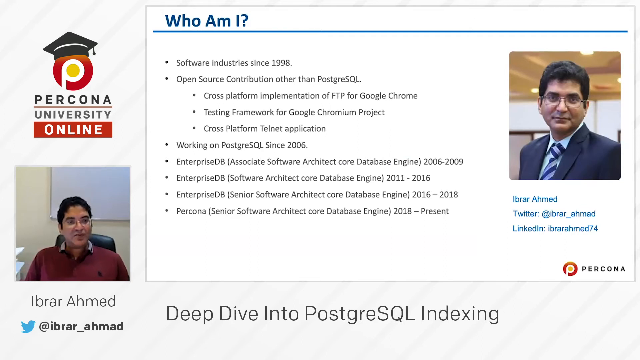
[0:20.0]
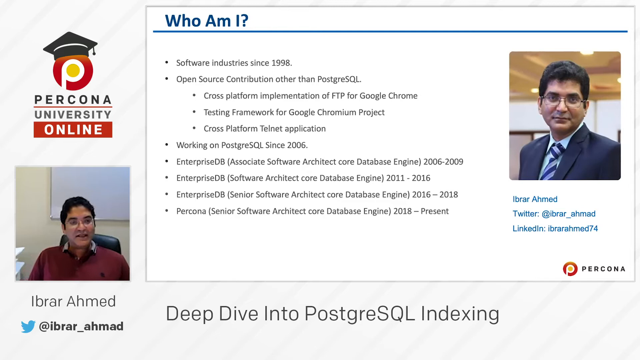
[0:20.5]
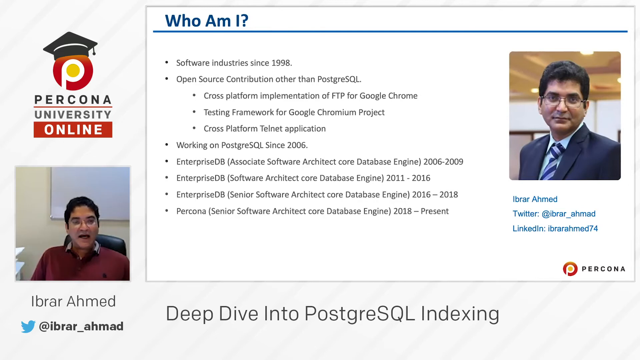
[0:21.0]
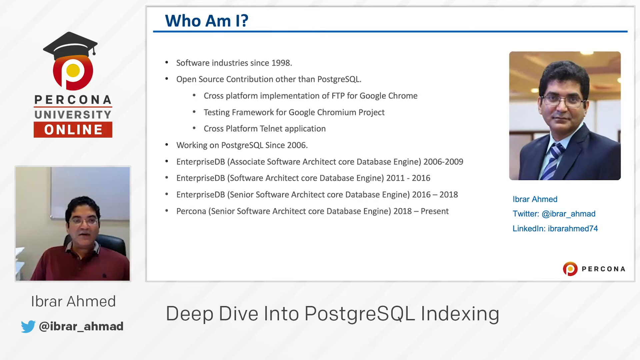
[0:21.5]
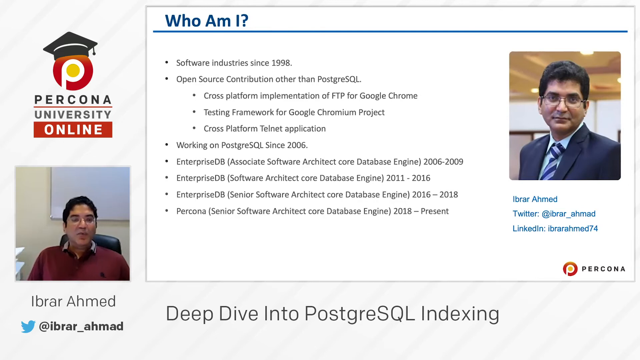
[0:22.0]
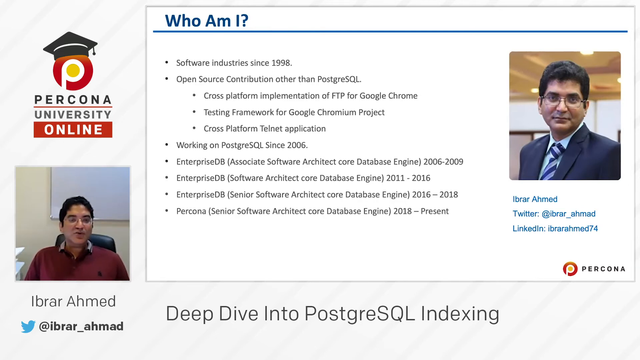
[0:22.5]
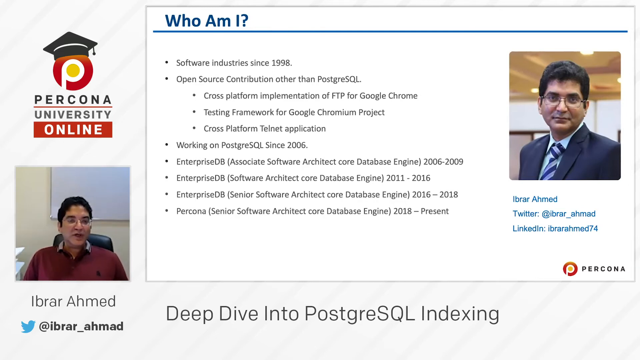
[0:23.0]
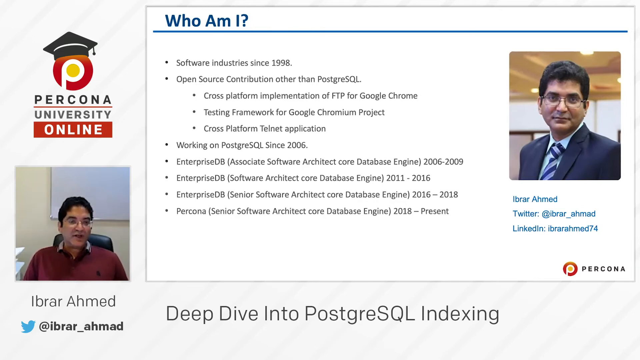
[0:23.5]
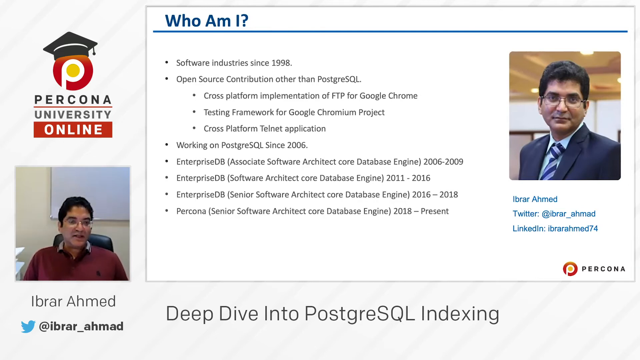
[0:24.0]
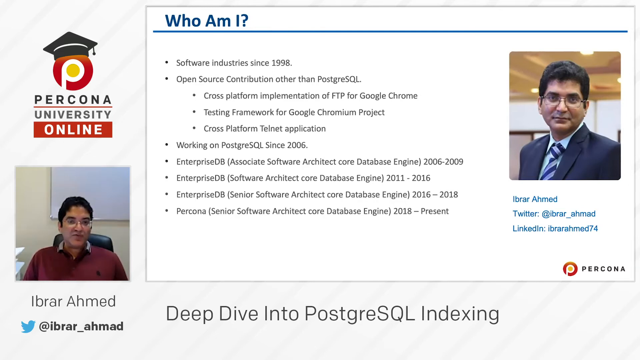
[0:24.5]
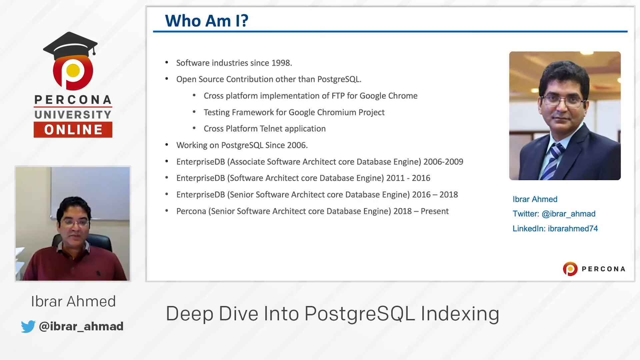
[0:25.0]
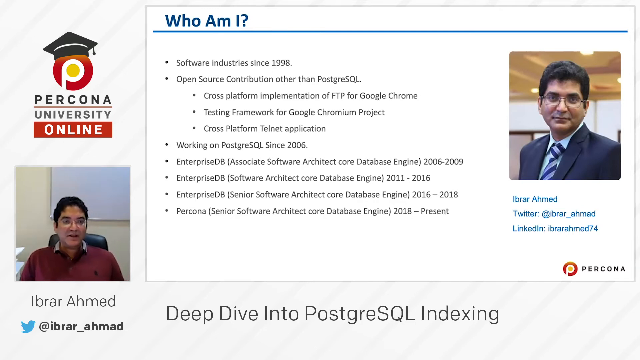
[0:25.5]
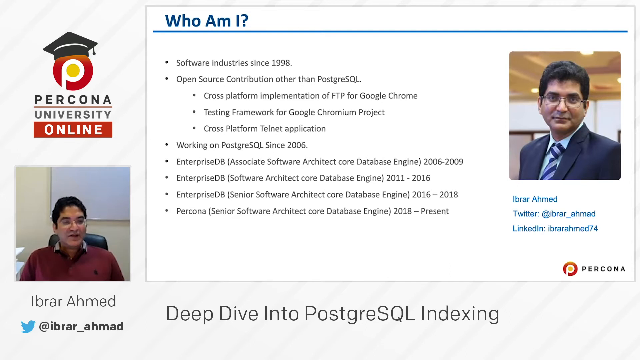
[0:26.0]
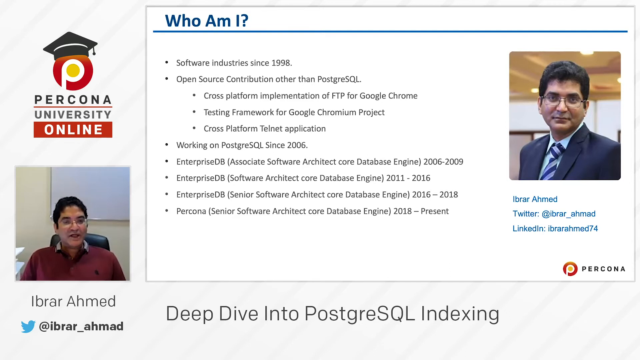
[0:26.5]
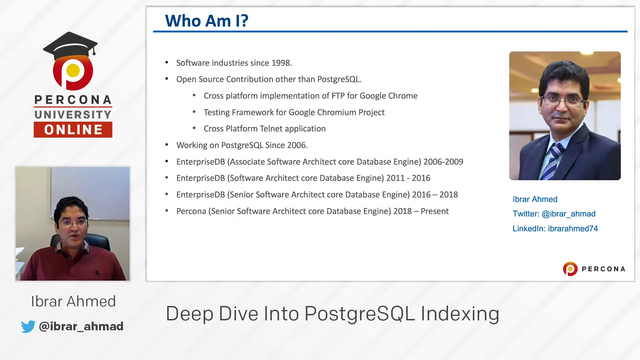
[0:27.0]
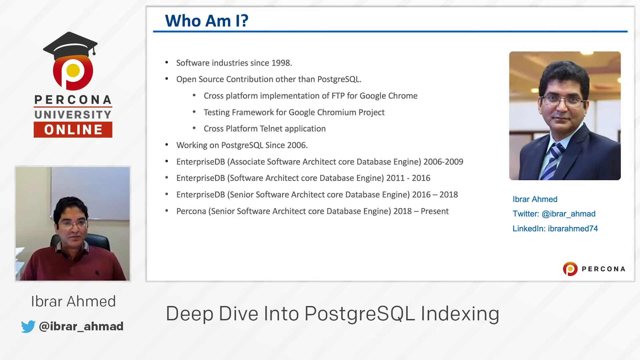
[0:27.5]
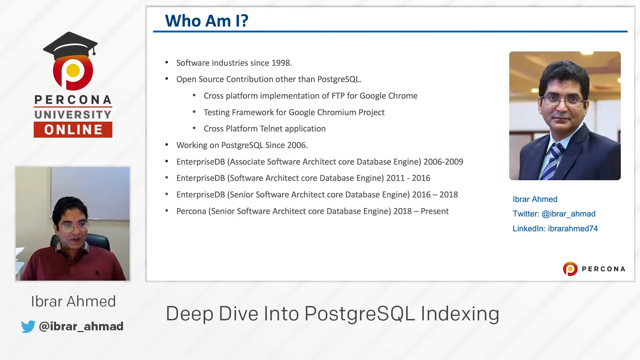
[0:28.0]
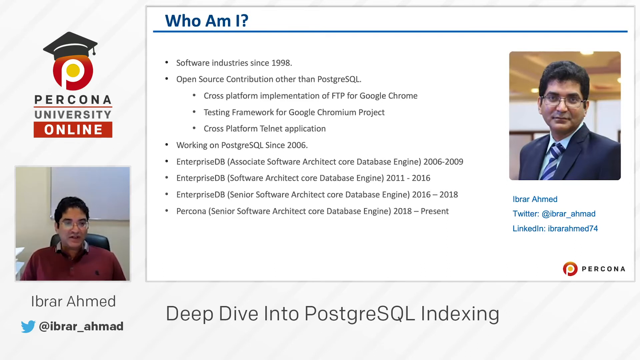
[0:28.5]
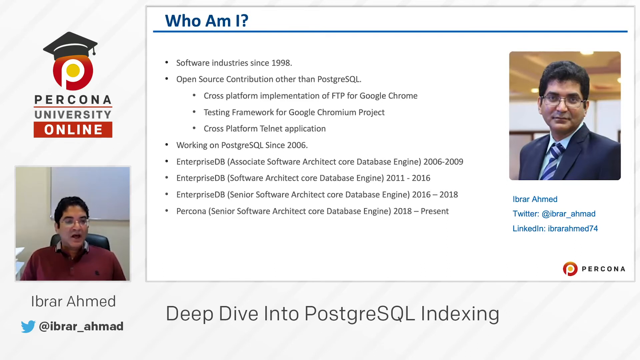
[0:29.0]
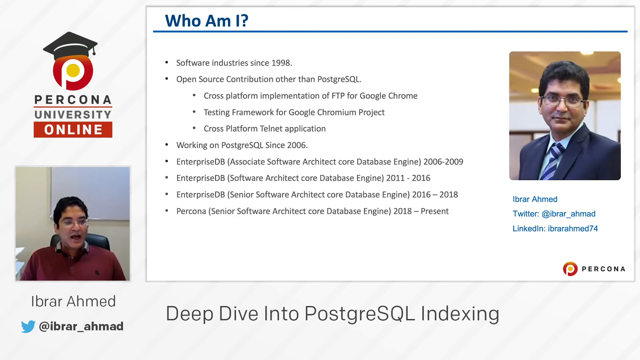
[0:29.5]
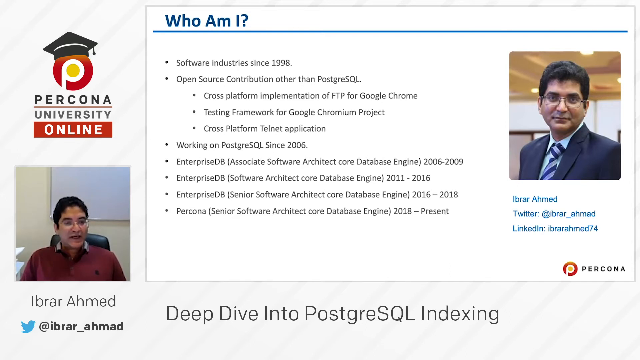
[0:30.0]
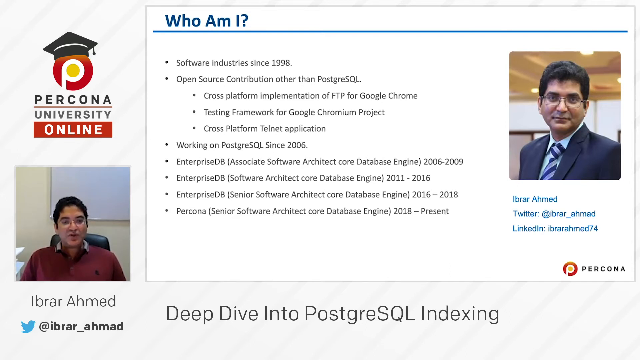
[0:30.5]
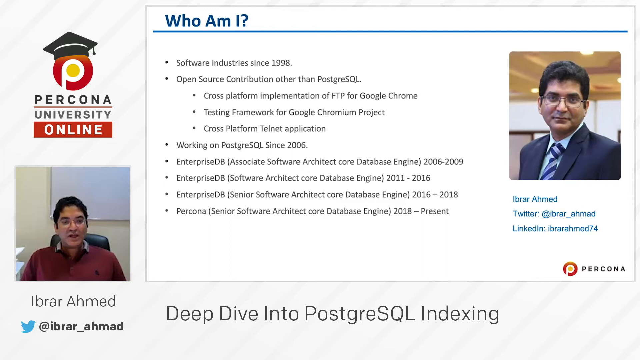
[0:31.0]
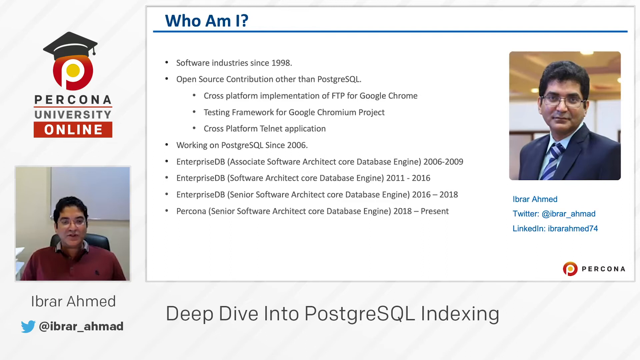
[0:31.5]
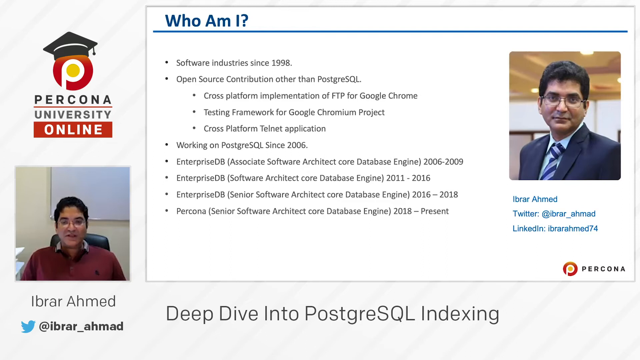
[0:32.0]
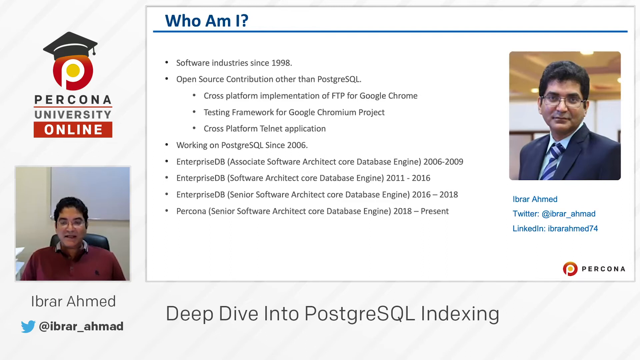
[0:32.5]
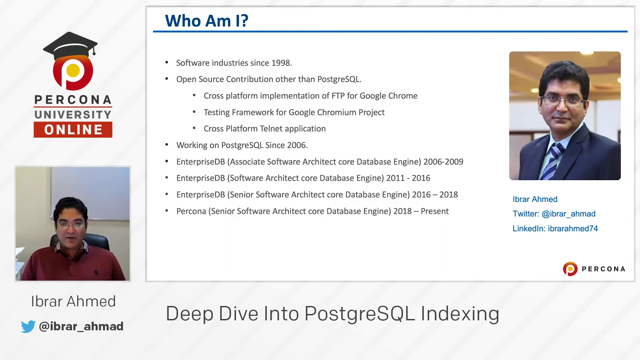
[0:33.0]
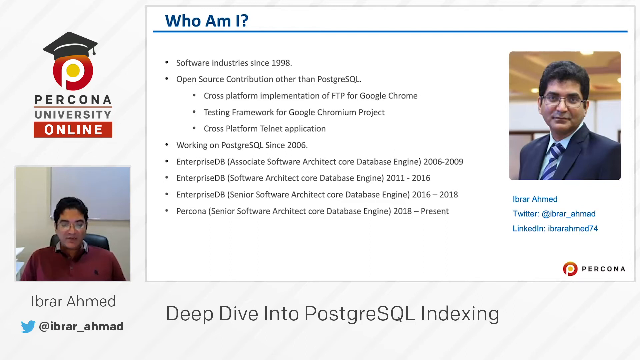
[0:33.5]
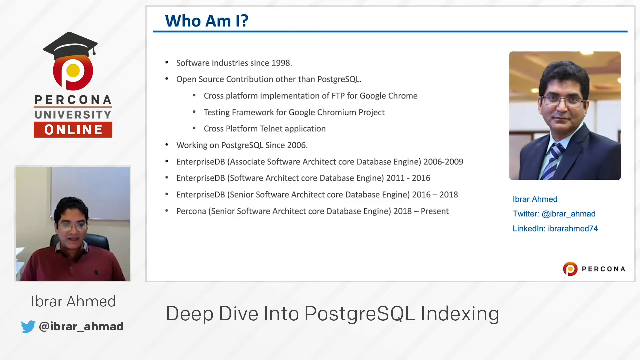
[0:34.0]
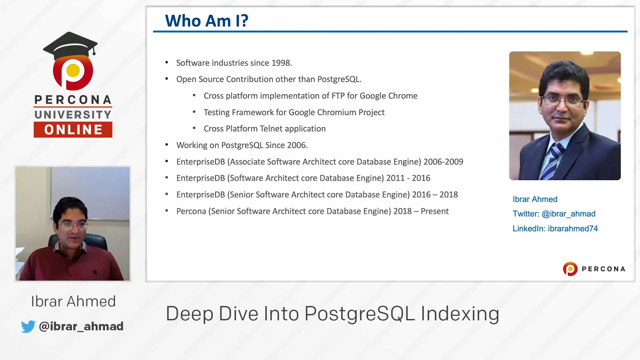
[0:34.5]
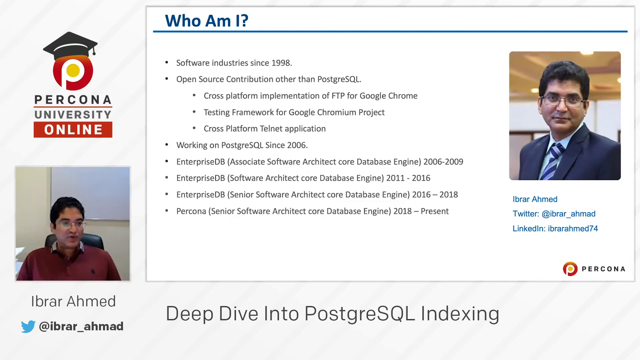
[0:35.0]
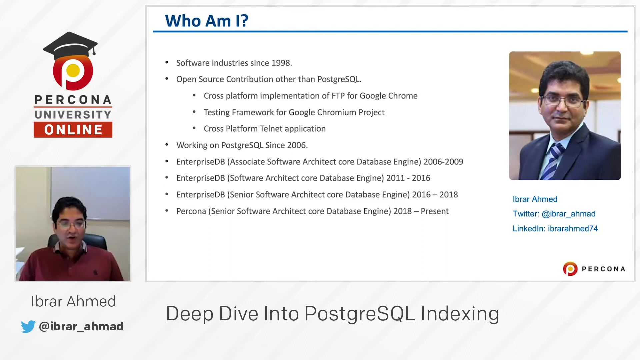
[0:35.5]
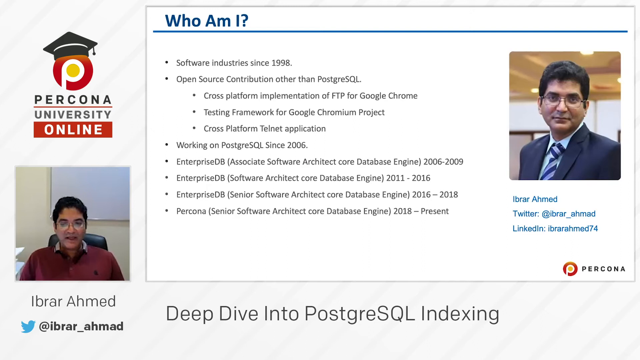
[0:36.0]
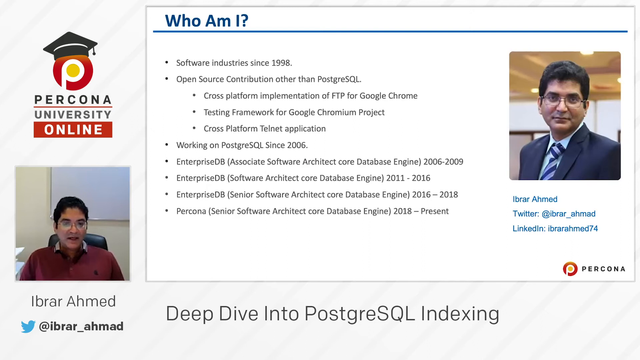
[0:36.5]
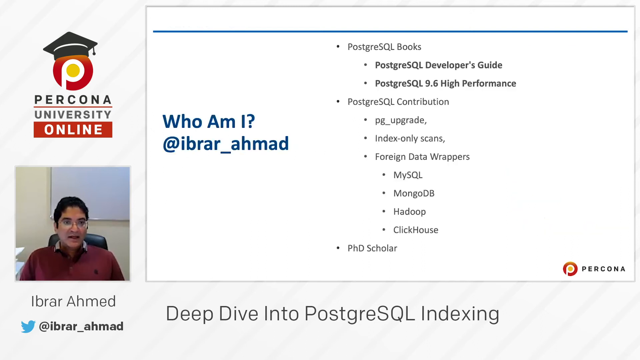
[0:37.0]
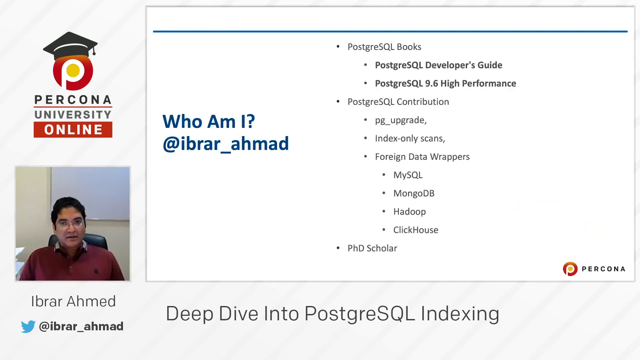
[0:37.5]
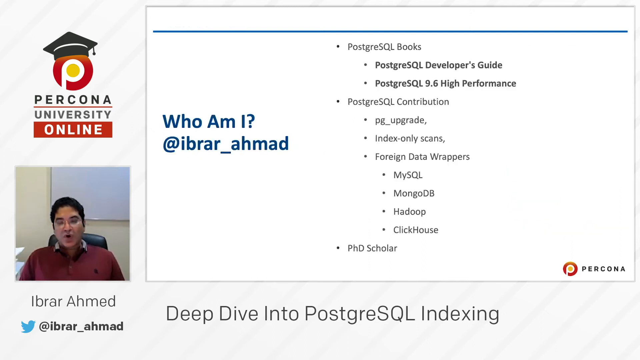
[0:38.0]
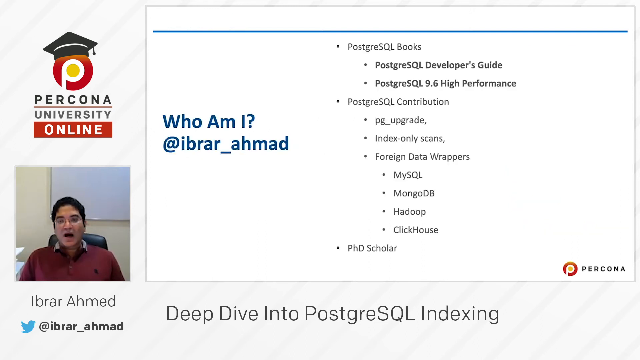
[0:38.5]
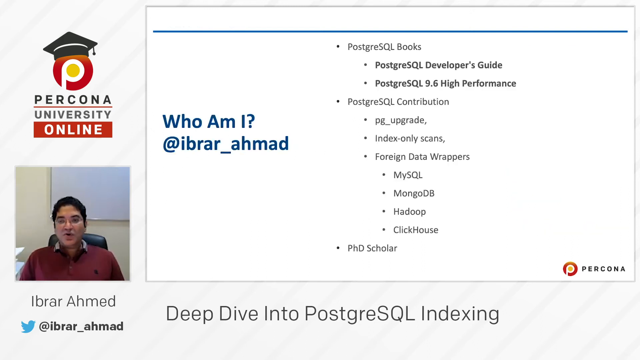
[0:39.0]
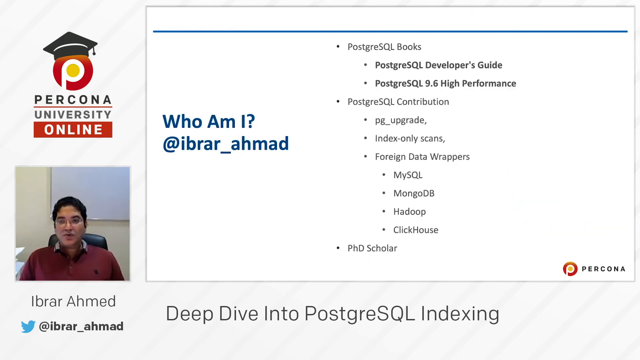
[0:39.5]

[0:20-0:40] A screen has bold blue text at the top reading "who am I" with a very long line, and bullet points in black text reading "software industry since 1998, open source contribution other than PostgreSQL, cross-platform implementation of FTP for Google Chrome, testing framework for Google, Chromium project, cross-platform Telnet application working on PostgreSQL since 2006, Enterprise DB Associate Software Architect Core Database Engine 2006 to 2009, Enterprise DB Software Architect Core Database Engine 2011 to 2016, Enterprise DB Senior Software Architect Core Database Engine 2016 to 2018, and Percona Senior Software Architect Core Database Engine 2018 to present." A photo shows an Indian man wearing glasses, with blue text under it reading "Ibrar Ahmed, Twitter at Ibrar_Ahmed, LinkedIn, Ibrar Ahmed 74," and a small Percona icon at the bottom. On the left is the Percona logo wearing a graduation hat, with text reading "Percona University Online." A video of the man is on the left side with his name and Twitter handle, and the title reads "Deep Dive into PostgreSQL Indexing." The man on the left looks at the camera and talks. Another screen appears with bold blue text reading "who am I, at Ibrar_Ahmed" and bullets reading "PostgreSQL books, PostgreSQL developers guide, PostgreSQL 9.6 high performance, PostgreSQL contribution, PG_upgrade index only scans, foreign data wrappers, MySQL, MongoDB, Hadoop, ClickHouse and PhD Scholar."